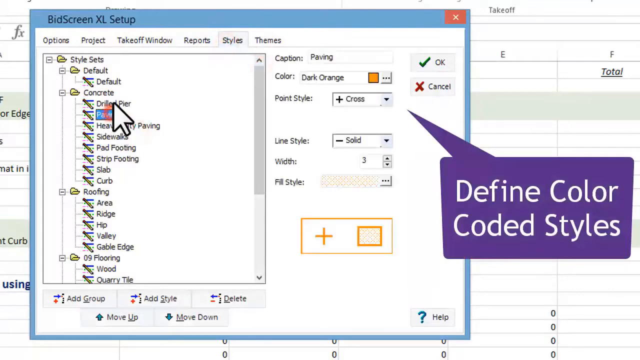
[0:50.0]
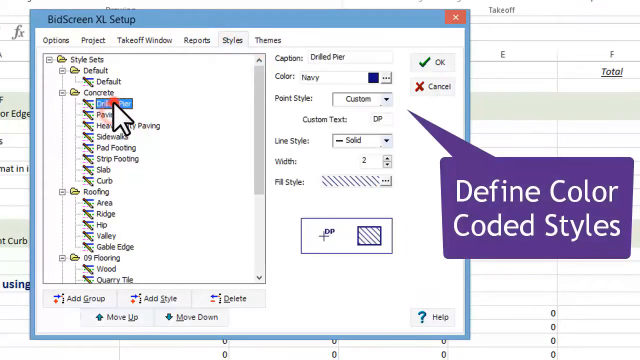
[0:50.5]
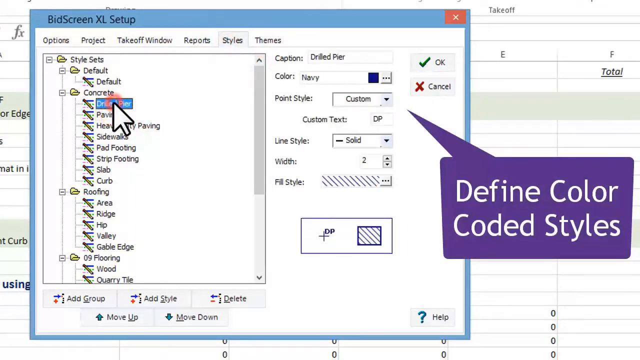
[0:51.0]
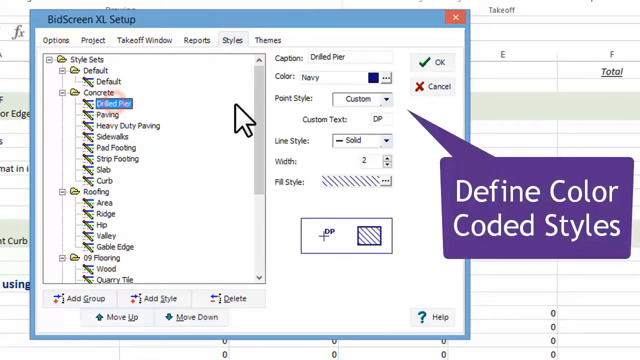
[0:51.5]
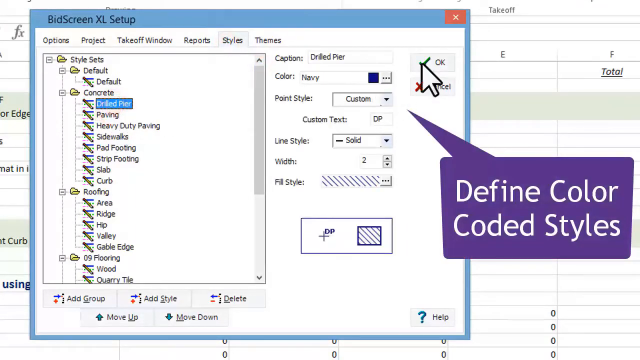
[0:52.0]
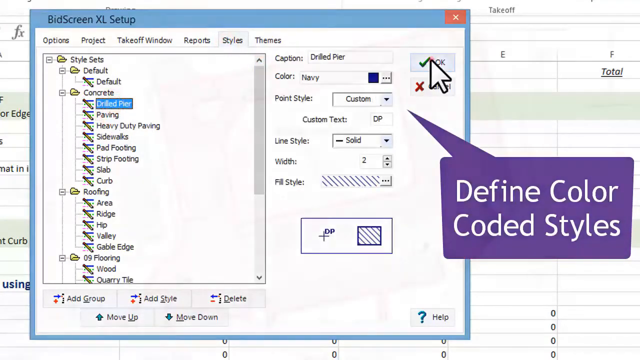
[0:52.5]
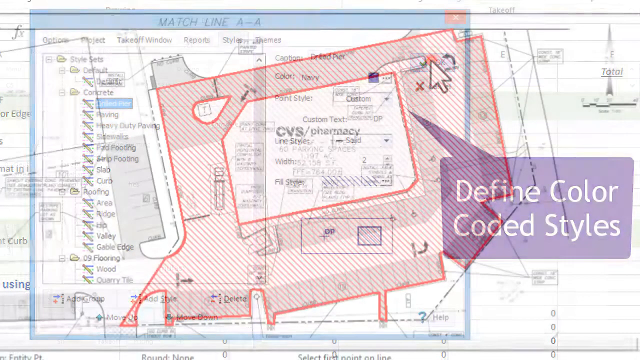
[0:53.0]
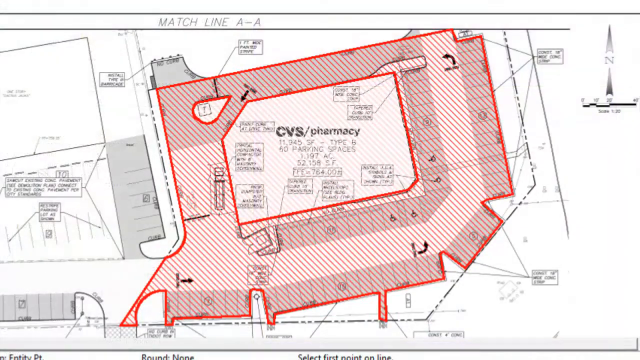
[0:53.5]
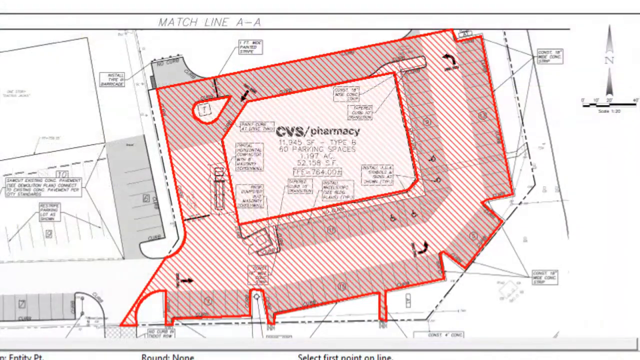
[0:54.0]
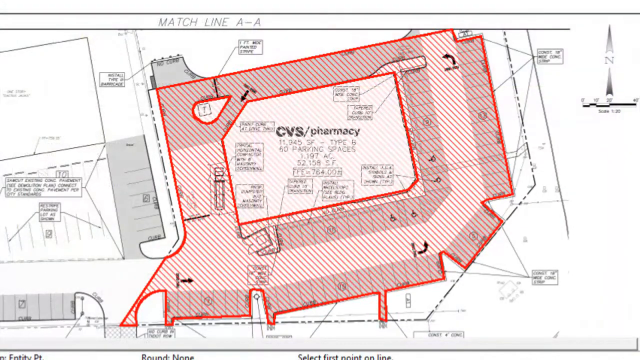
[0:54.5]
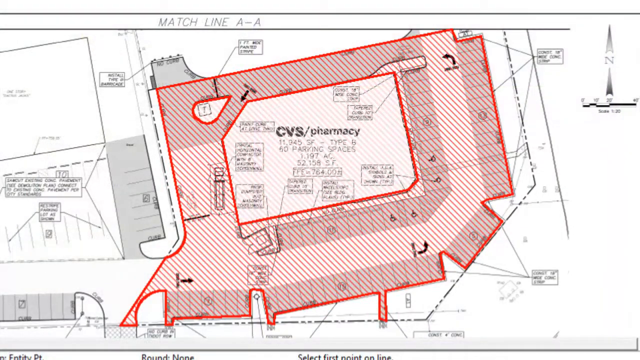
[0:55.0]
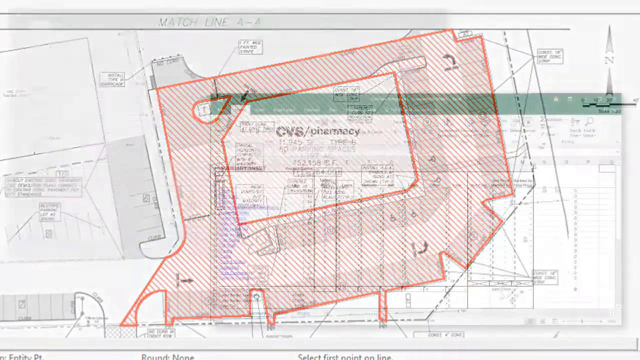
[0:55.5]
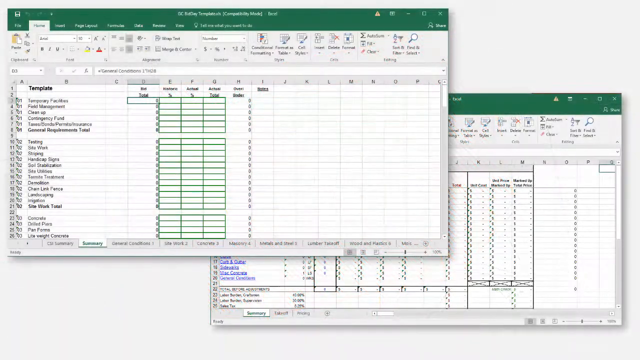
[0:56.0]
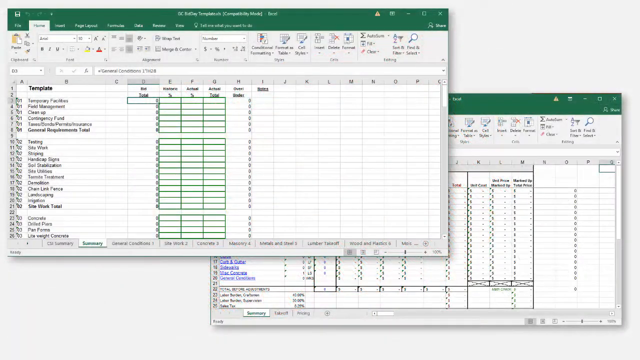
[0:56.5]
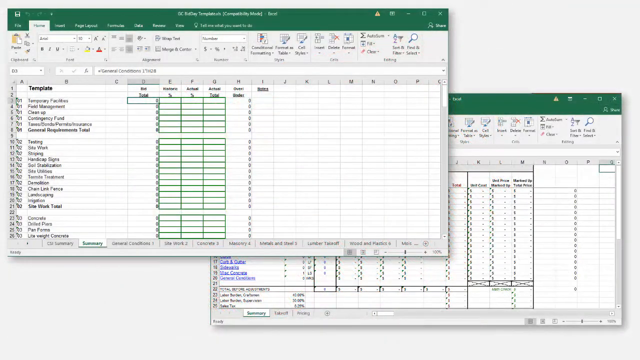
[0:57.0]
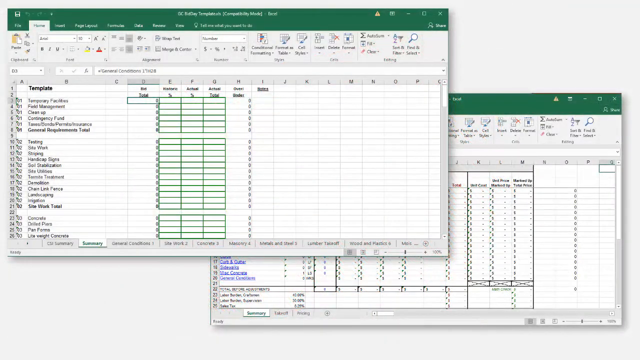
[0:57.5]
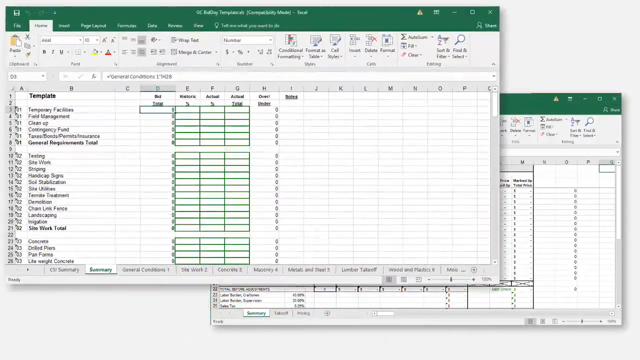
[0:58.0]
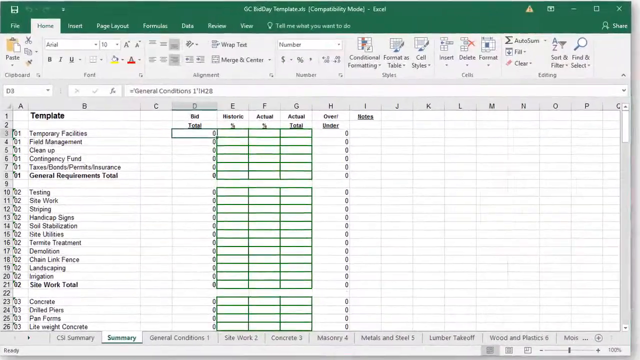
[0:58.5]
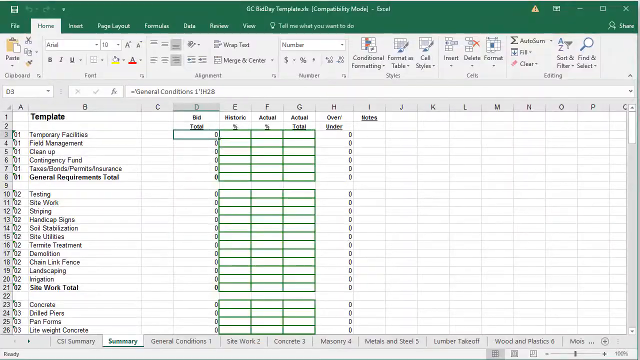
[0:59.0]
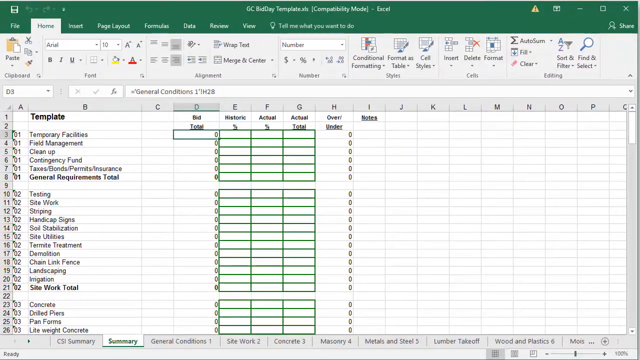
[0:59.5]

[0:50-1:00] After the defined color style, there is a column at the top right corner that can be clicked to choose a document used to track and keep records of construction activities on construction sites. A diagram connected to the design is shown, which can be zoomed in and out by pressing the control button while moving the cursor, giving a clearer view of the application. A cancel button and a defaults option are also visible.